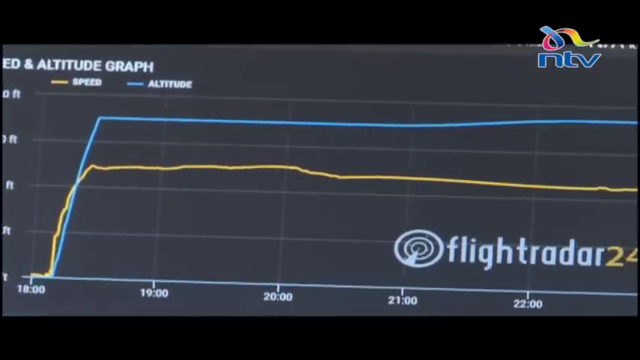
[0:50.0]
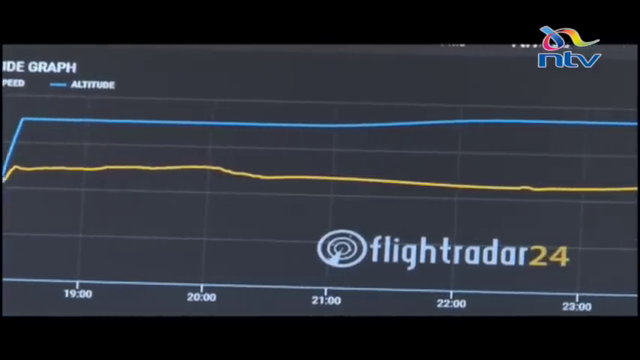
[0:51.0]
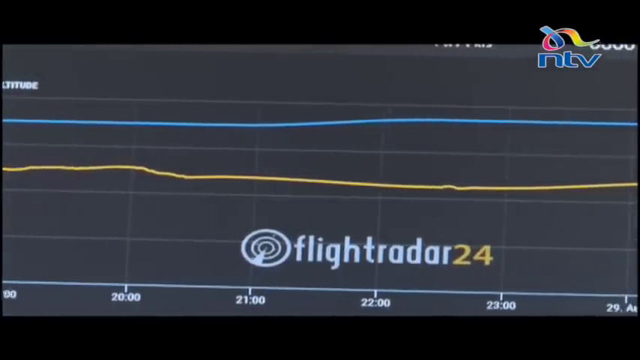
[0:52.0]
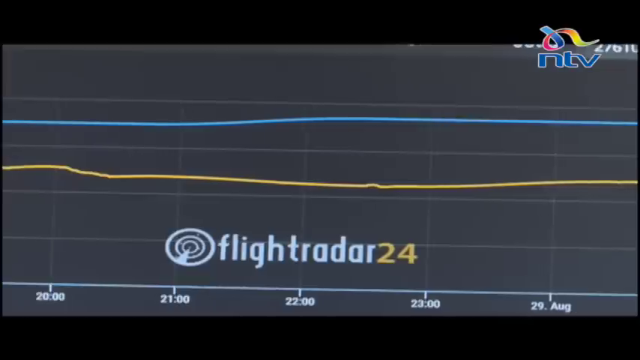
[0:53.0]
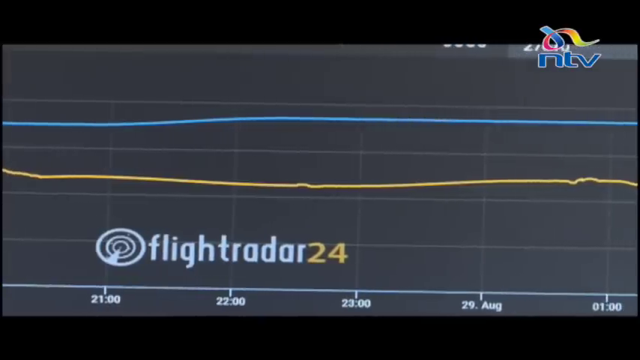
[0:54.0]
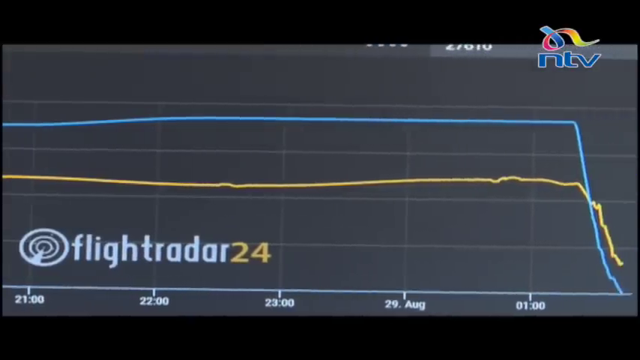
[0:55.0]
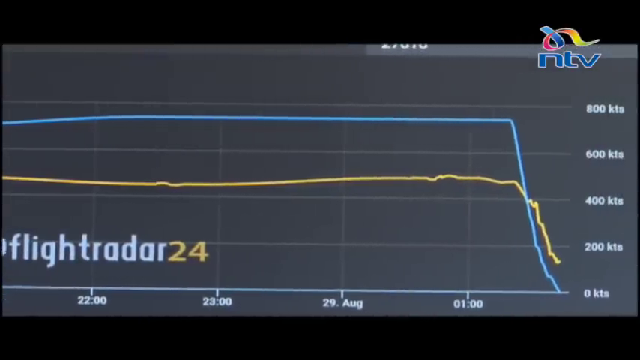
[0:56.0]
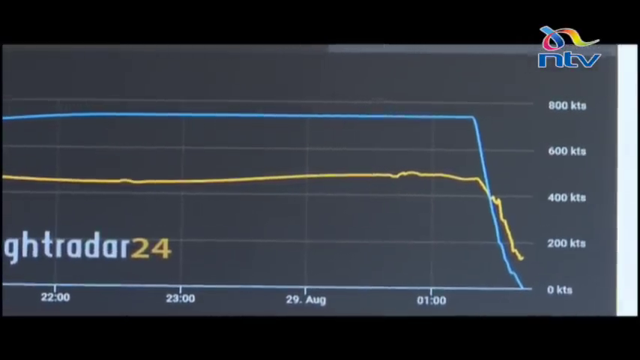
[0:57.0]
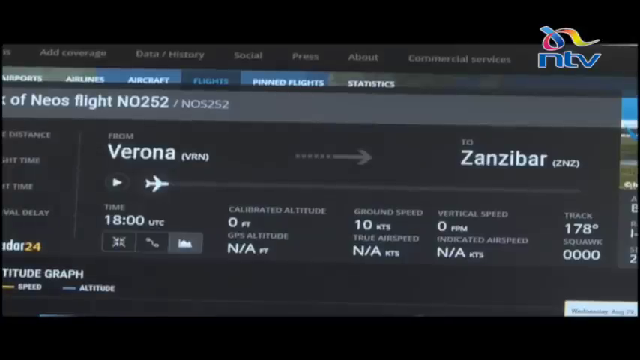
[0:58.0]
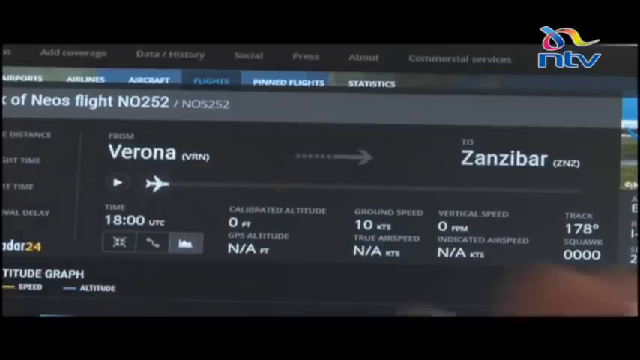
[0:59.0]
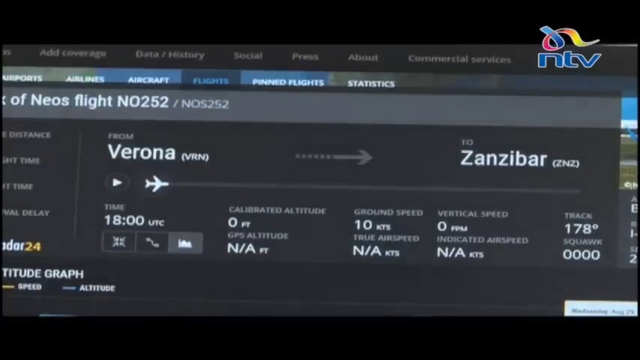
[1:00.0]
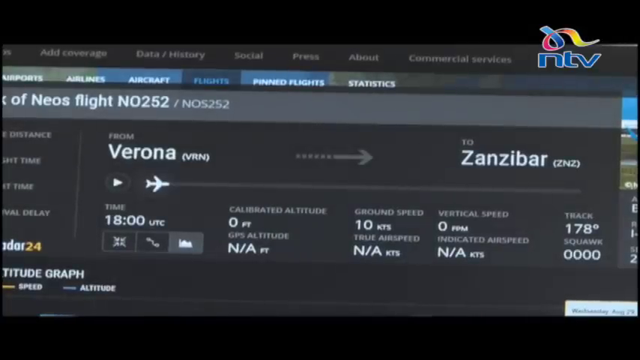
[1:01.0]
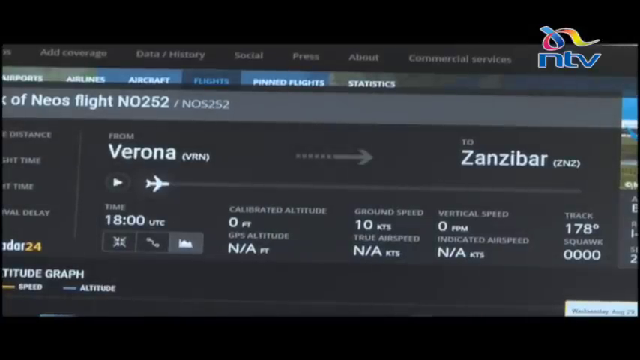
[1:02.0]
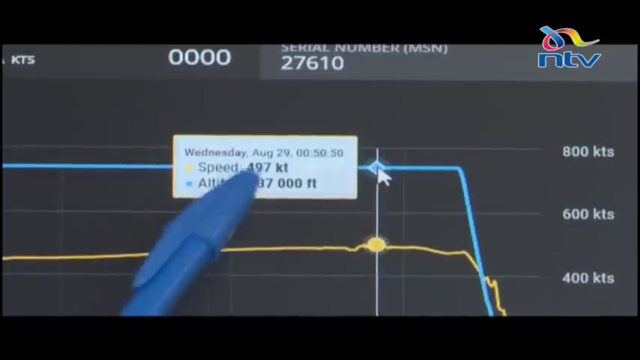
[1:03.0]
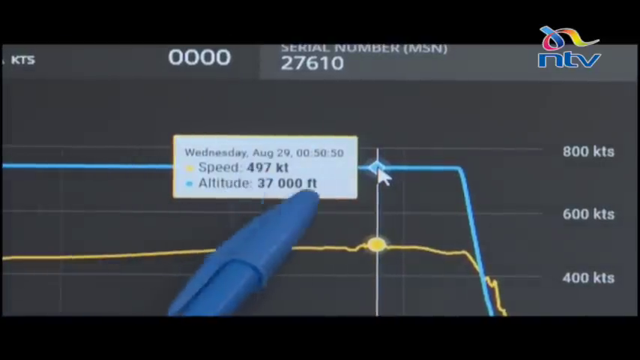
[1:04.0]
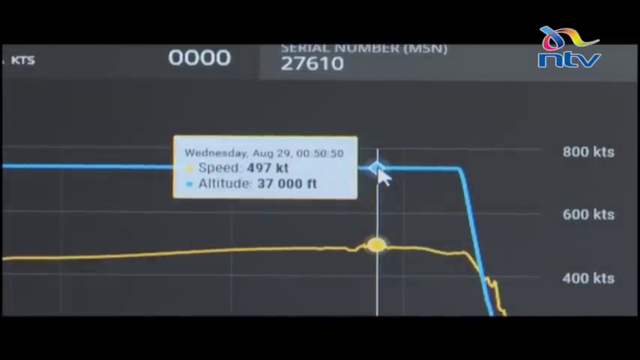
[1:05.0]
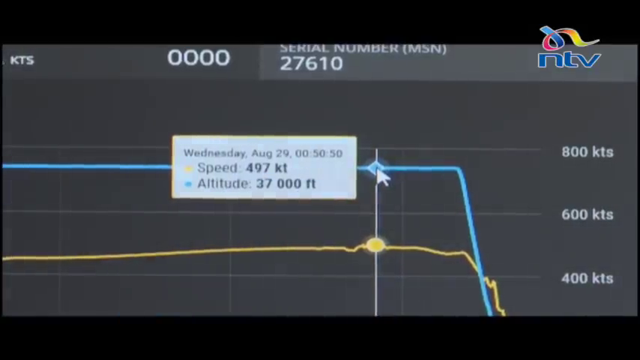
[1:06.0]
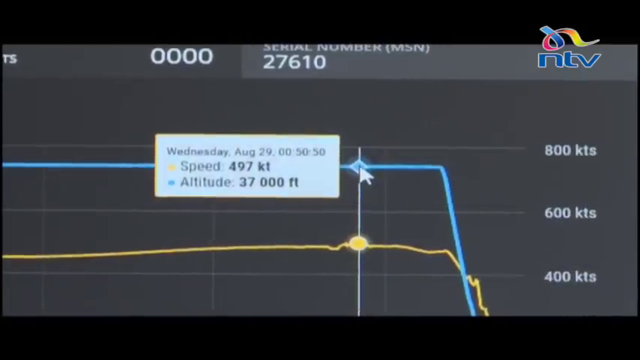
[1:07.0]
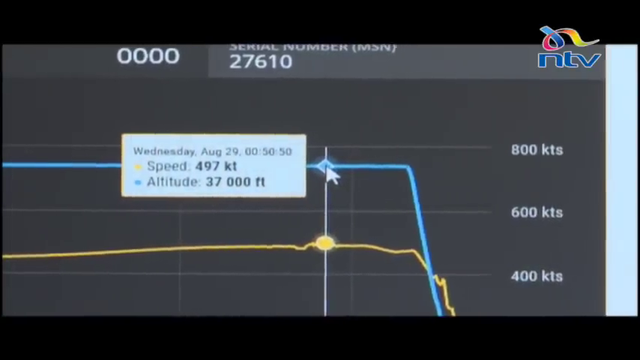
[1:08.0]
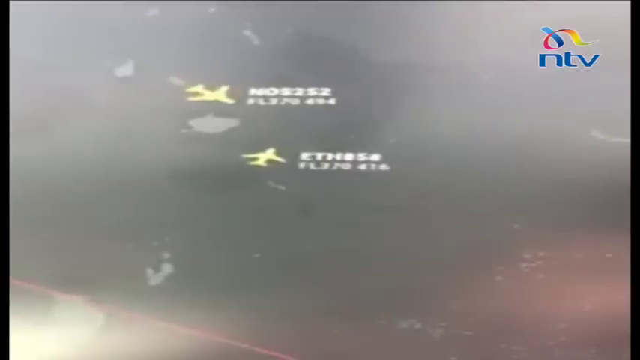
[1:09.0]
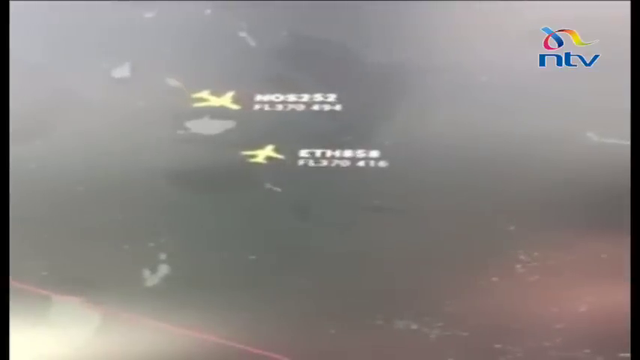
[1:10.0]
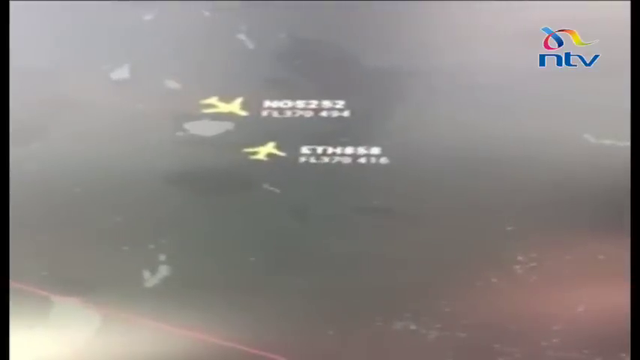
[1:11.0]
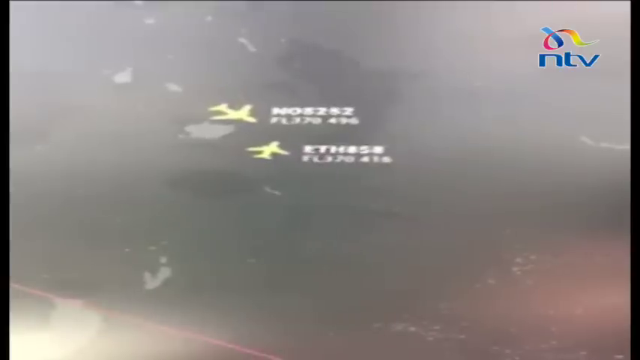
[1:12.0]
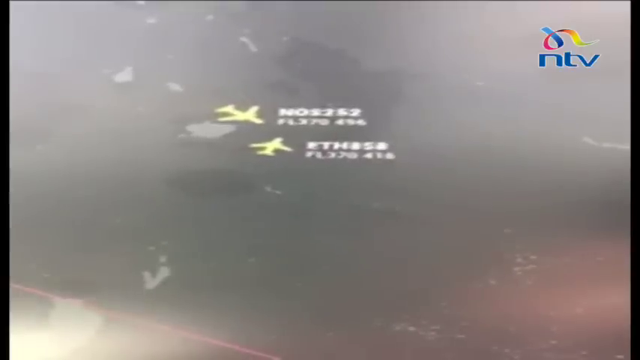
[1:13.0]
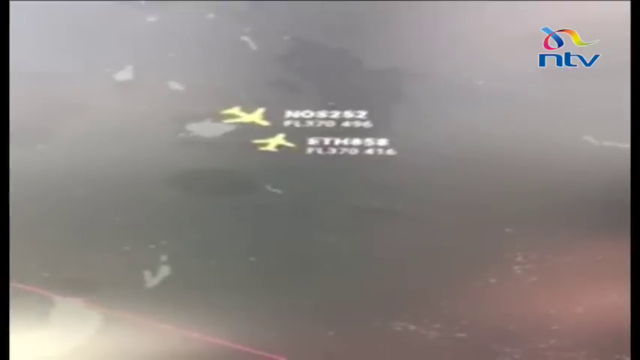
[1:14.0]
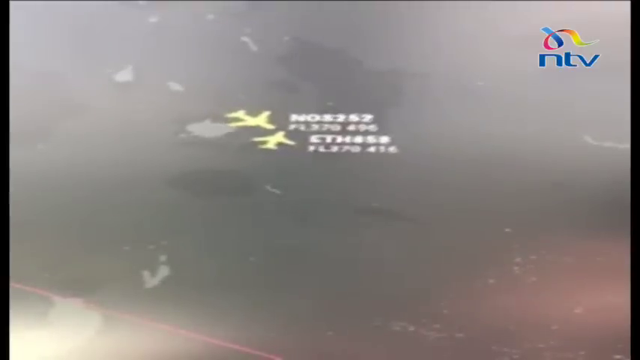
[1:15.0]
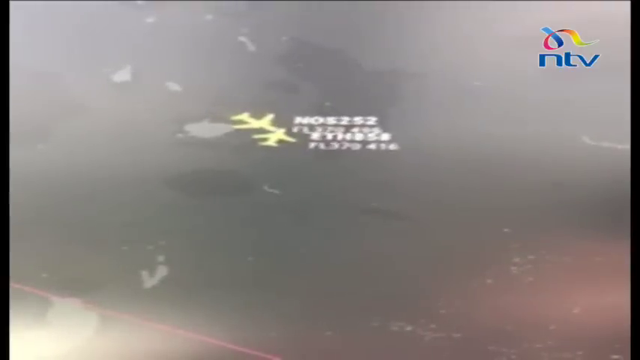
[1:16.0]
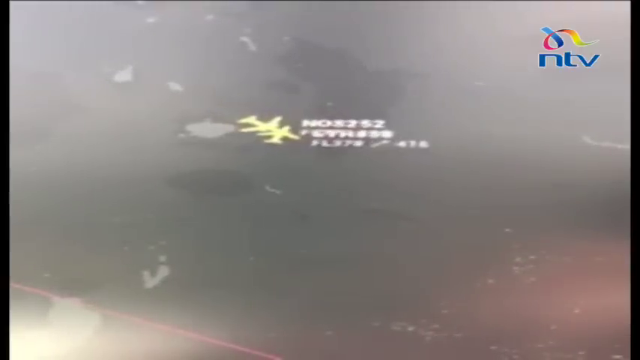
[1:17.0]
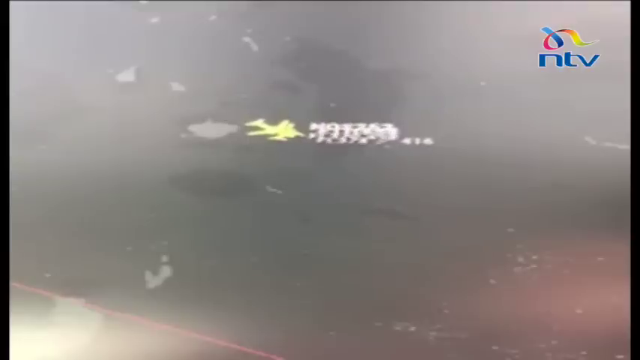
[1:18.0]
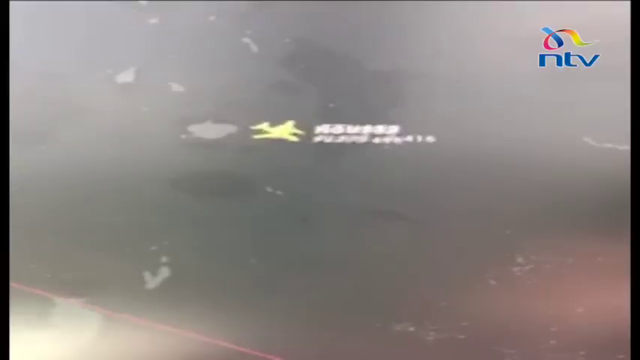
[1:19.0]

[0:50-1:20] A line graph shows two lines, a green line and a yellow line, apparently representing different items such as altitude or speed. A pin point says "flight trader 24", with 24 written in numbers. Different numbers are visible, and the lines are not the same; the yellow line represents speed and the other line represents altitude. The lines keep moving until the end of the line. The view then returns to a ticket, another ticket showing different countries. The tickets show time, speed and weather.